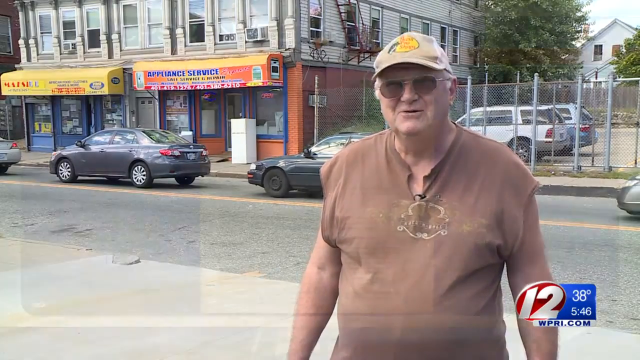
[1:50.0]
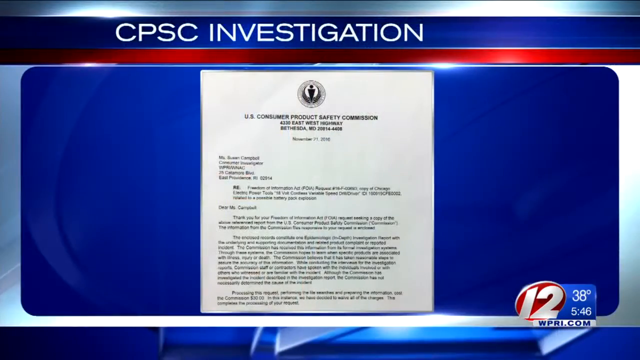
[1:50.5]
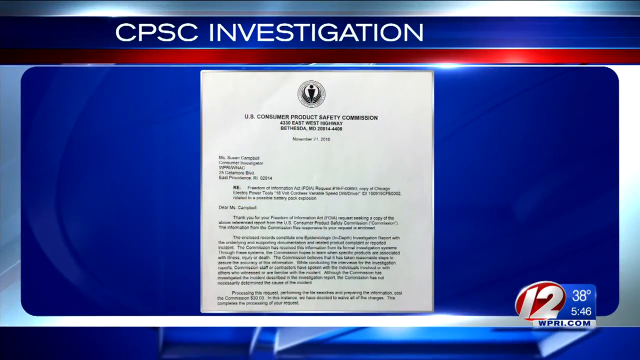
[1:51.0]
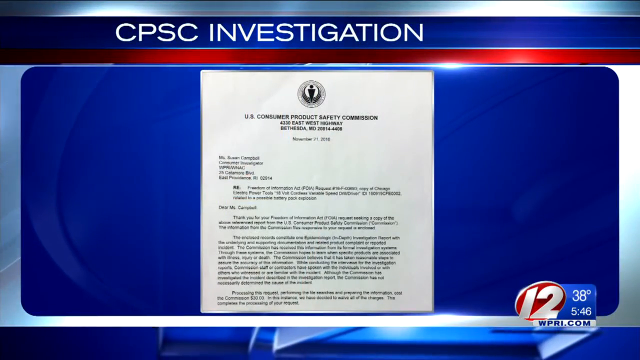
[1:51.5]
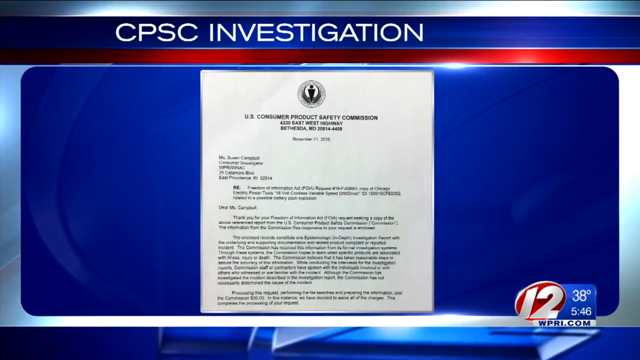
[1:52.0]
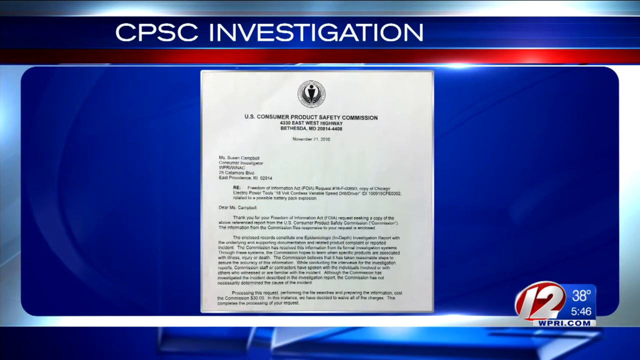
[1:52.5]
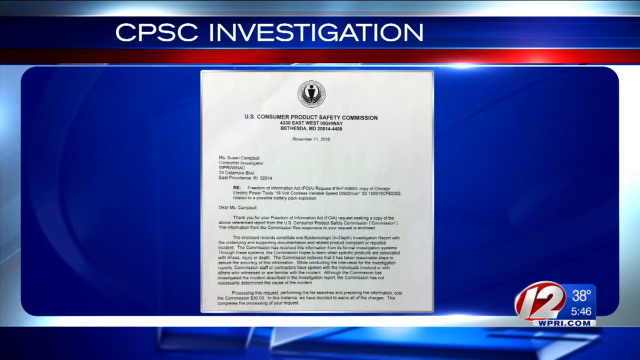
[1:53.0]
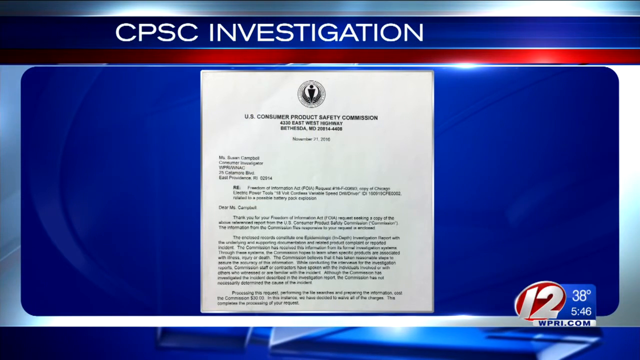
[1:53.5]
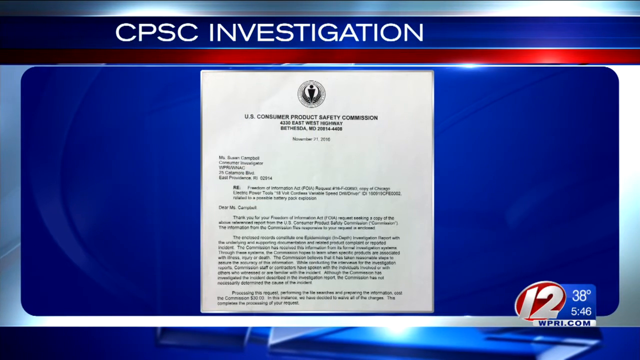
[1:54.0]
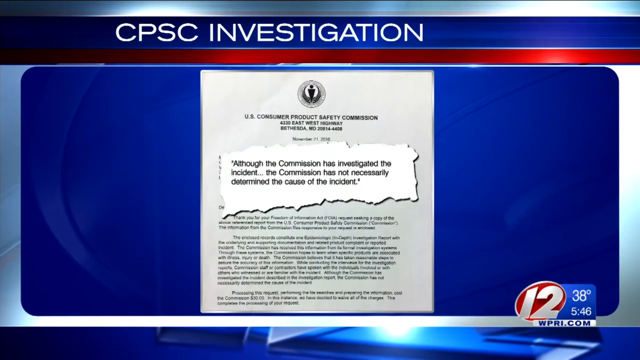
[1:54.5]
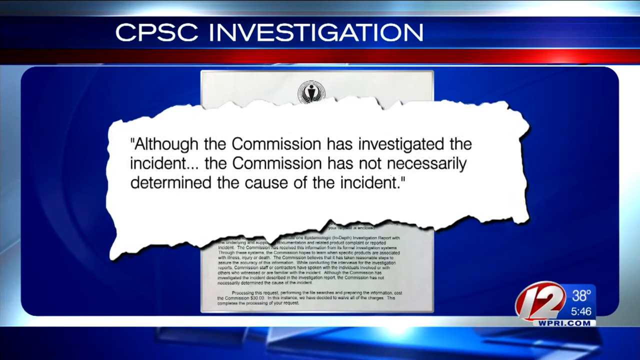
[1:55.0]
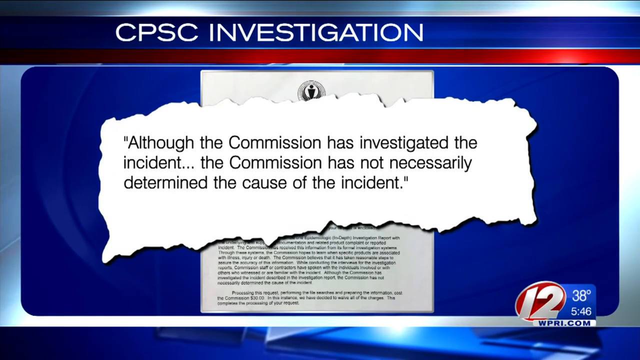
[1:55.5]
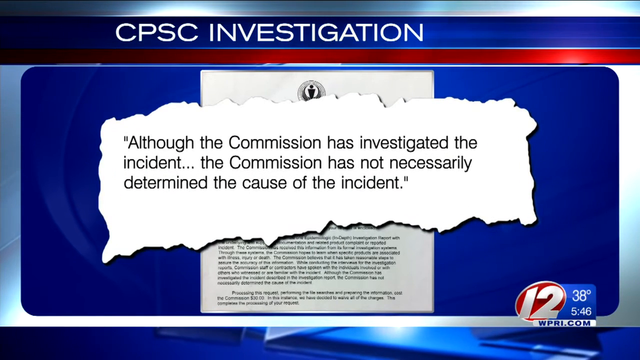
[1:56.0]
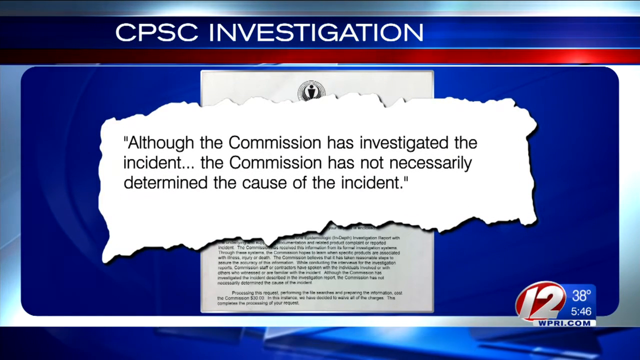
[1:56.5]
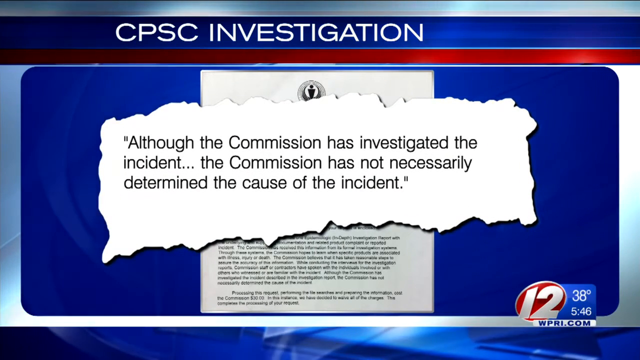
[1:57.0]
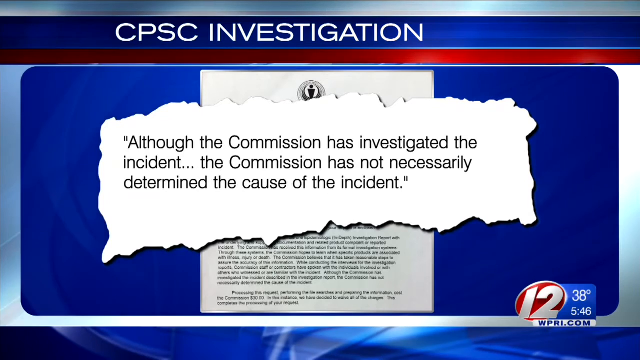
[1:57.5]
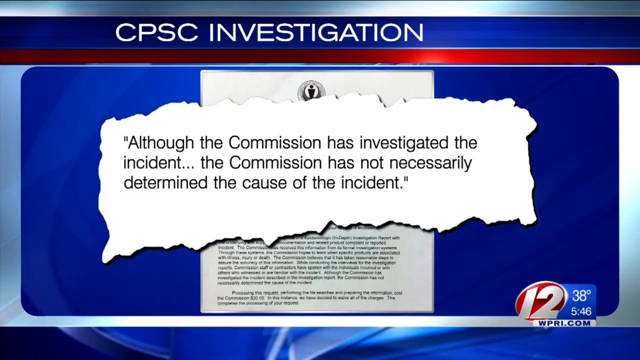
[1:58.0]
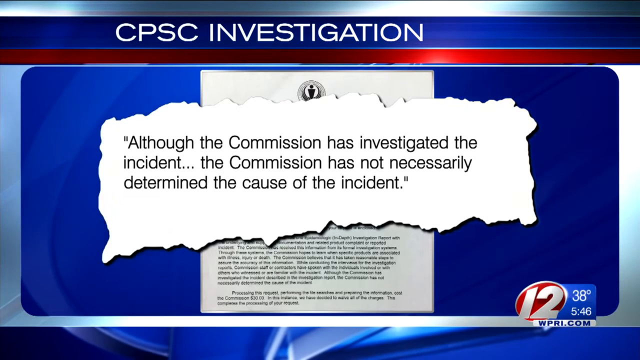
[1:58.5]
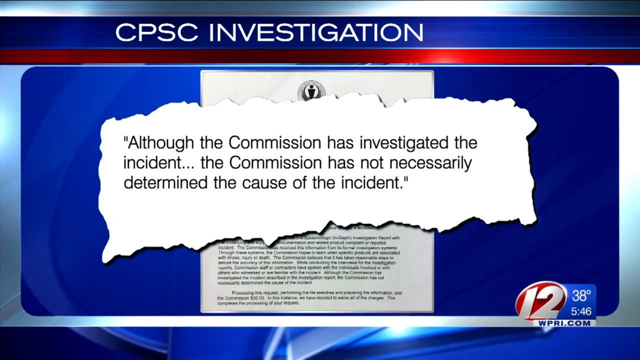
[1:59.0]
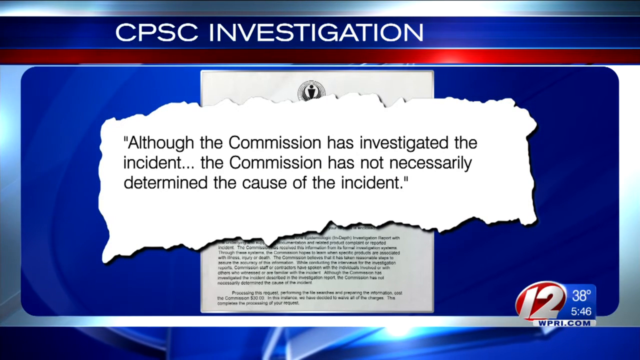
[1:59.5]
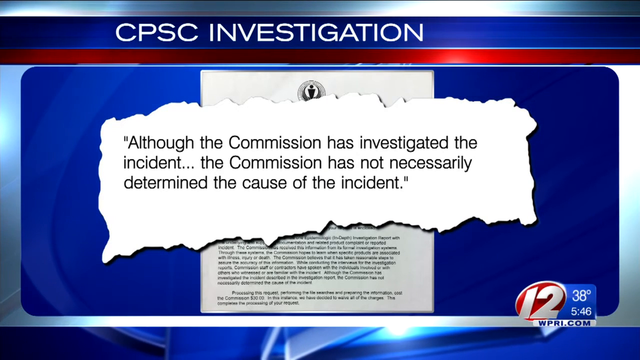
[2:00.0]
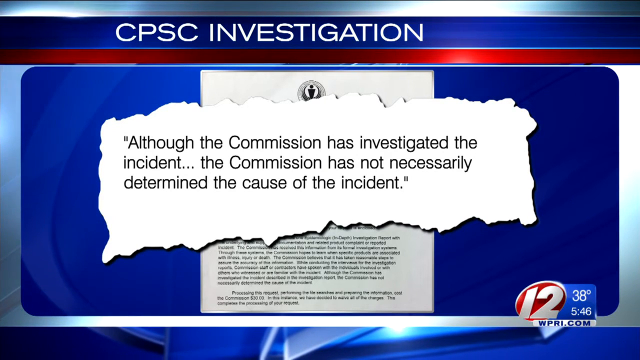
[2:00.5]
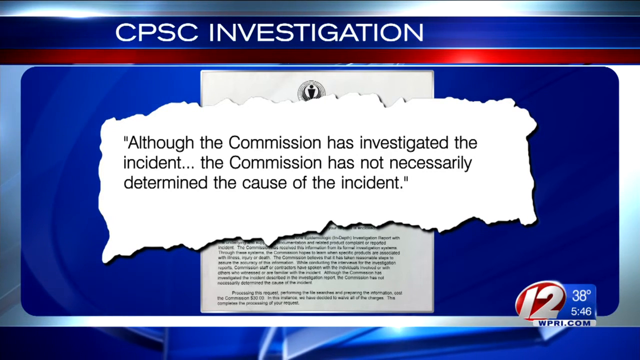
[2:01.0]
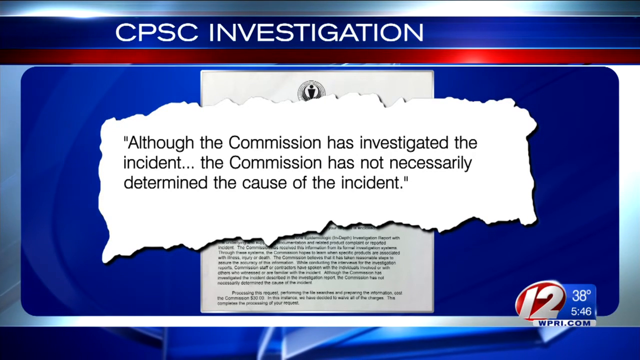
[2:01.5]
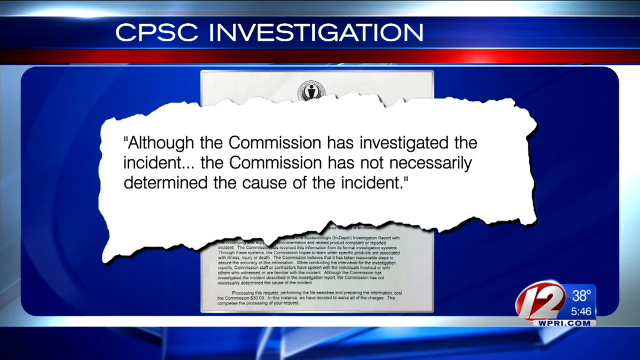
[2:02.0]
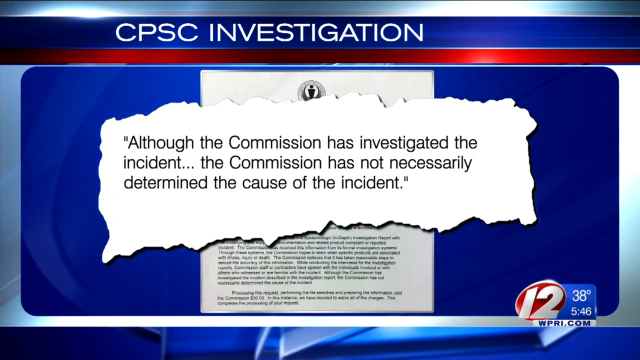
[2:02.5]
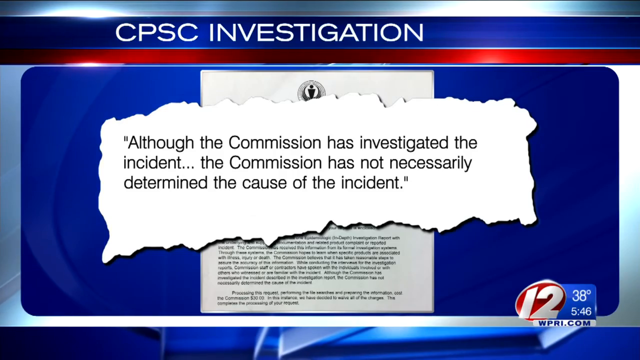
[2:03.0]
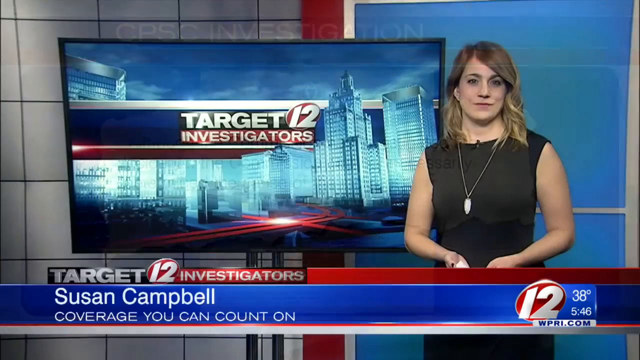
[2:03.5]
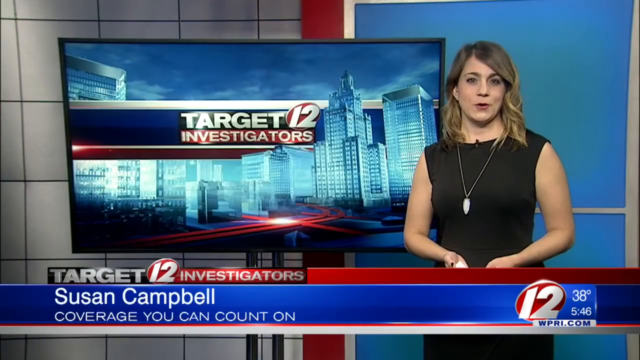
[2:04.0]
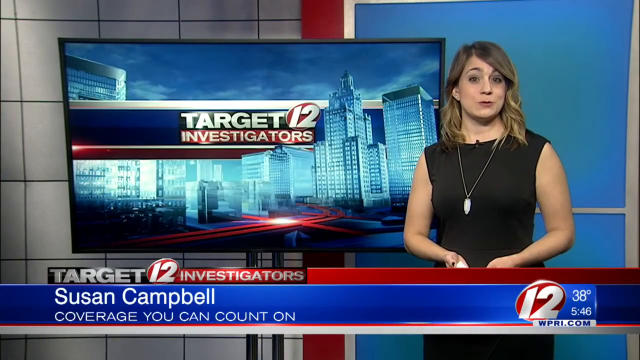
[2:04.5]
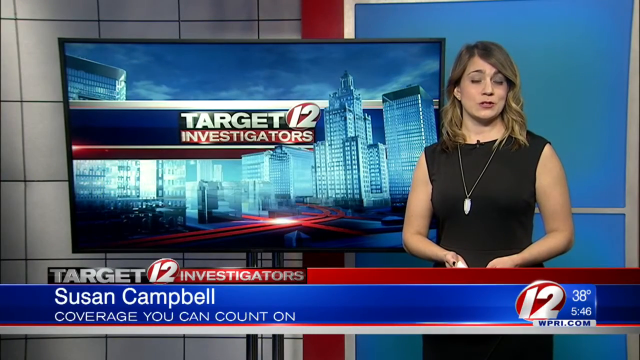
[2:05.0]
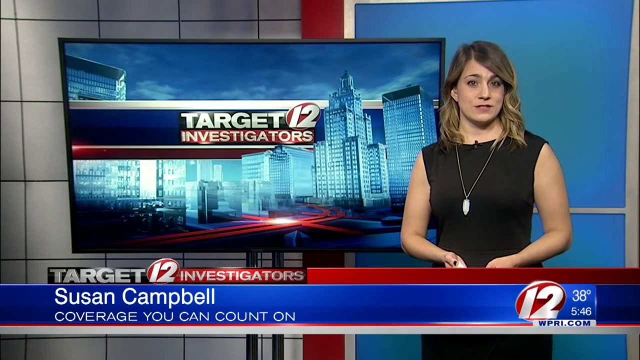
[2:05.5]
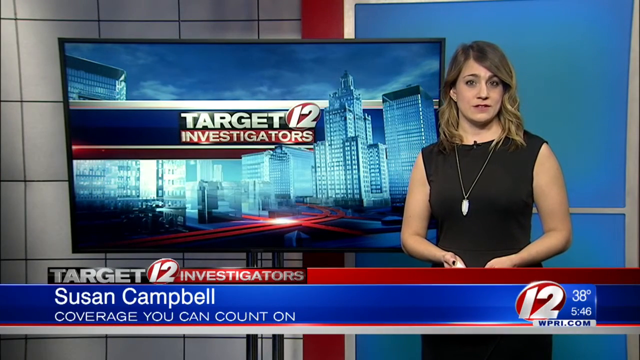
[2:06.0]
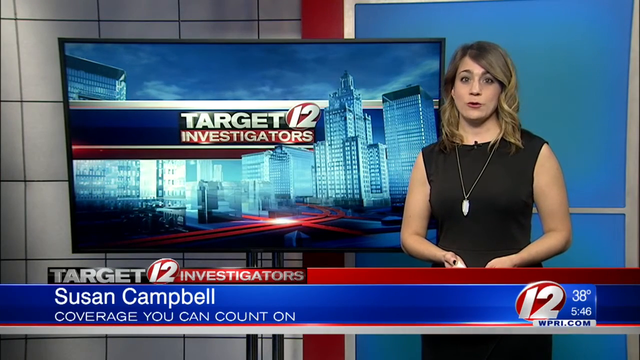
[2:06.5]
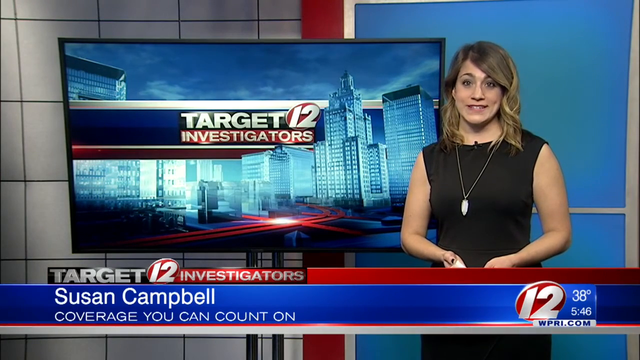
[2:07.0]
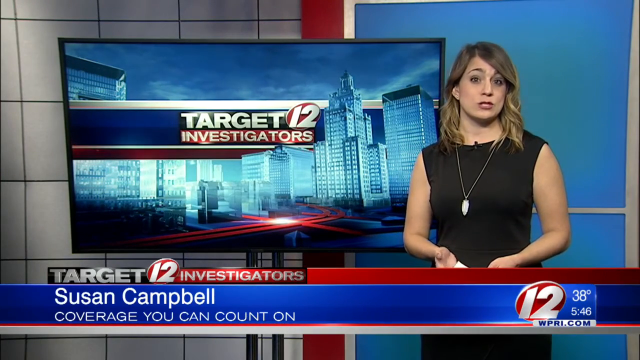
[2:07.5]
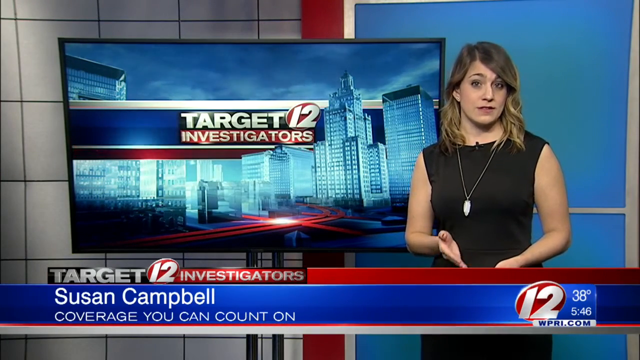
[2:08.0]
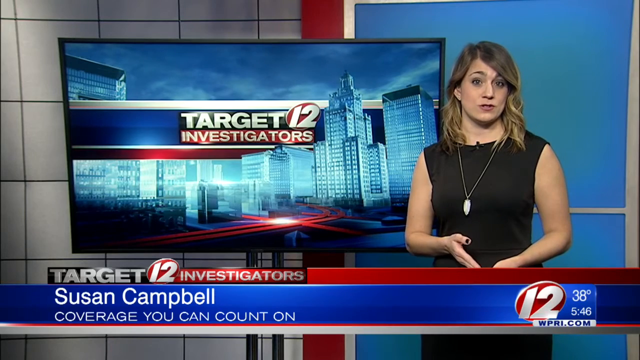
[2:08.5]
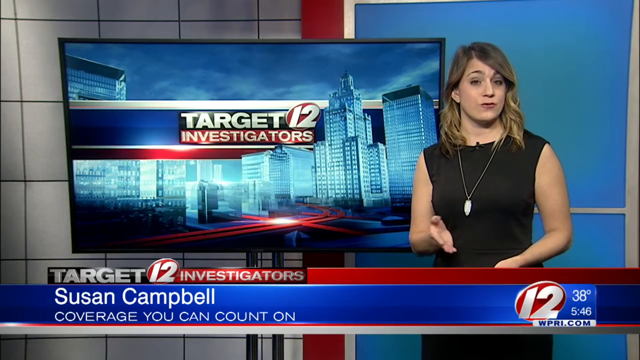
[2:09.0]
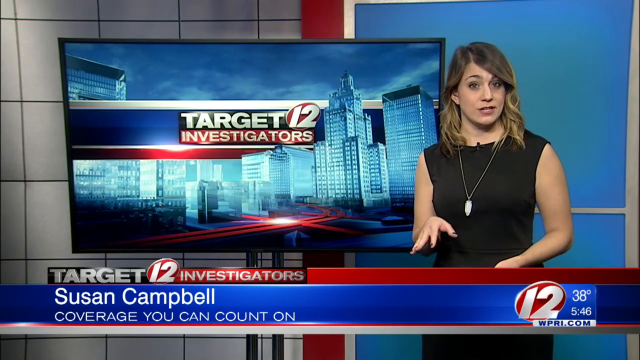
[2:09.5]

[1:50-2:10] The video cuts from the man on the street to what looks like a document that states "US Consumer Product Safety Commission," with a border at the top that says "CPSC investigation." Text pops out from the document toward the front, saying "although the commission has investigated the incident, the commission has not necessarily determined the cause of the incident," and the camera lingers there for a few seconds. It then cuts back to the woman news anchor standing to the right side of the large television screen. She looks like she is wrapping up her story, with her hands placed out in front of her abdomen, and appears to be talking confidently to the camera. She moves her right hand in a handshaking-like gesture as if making a point to the camera, and then that hand turns over.